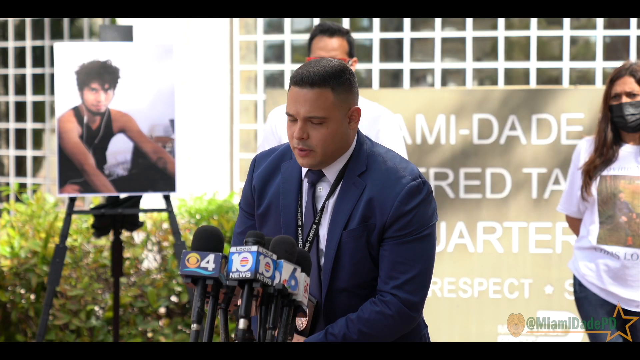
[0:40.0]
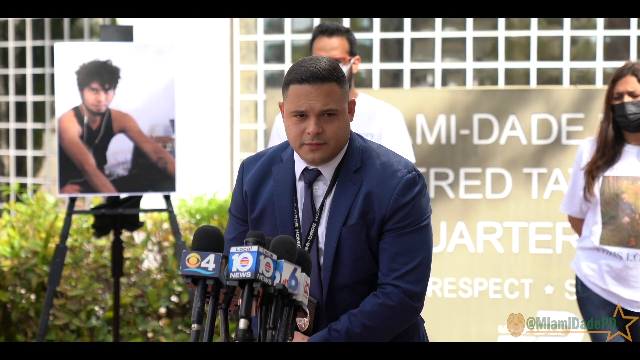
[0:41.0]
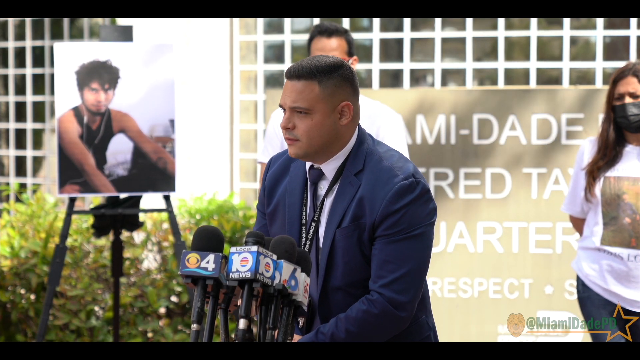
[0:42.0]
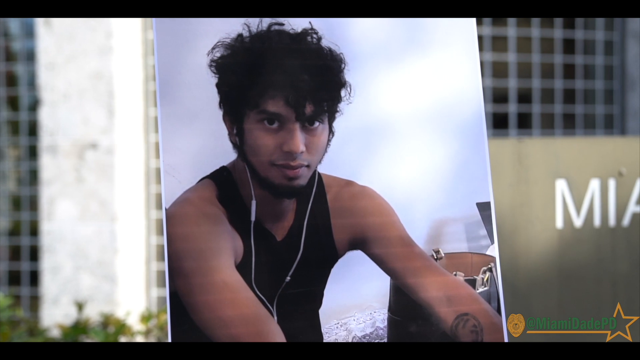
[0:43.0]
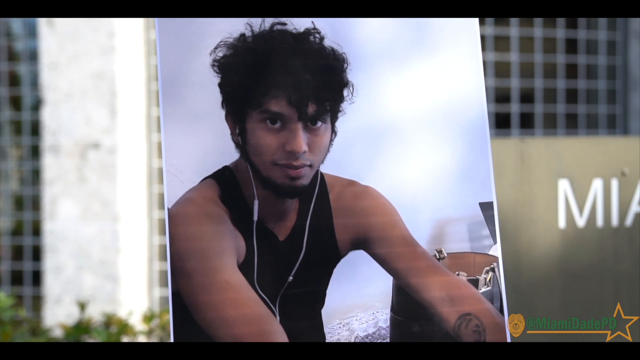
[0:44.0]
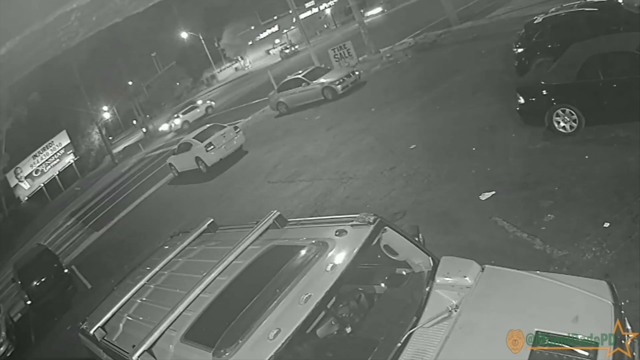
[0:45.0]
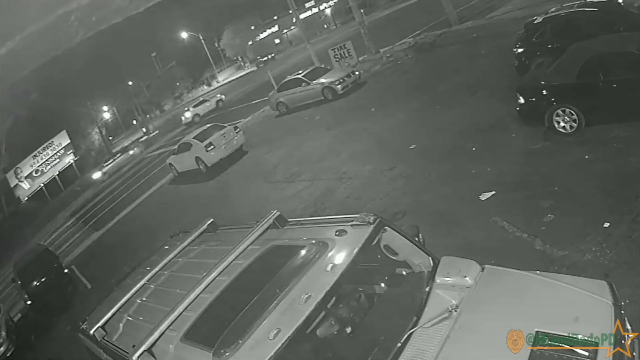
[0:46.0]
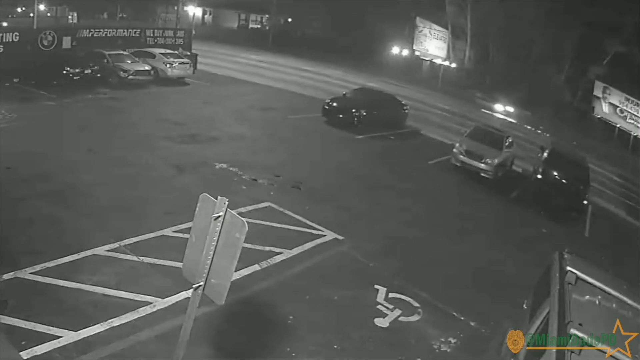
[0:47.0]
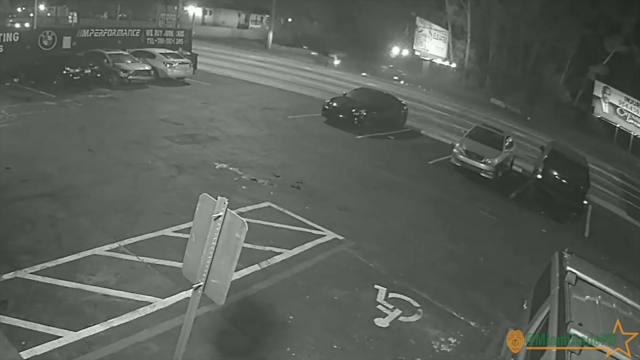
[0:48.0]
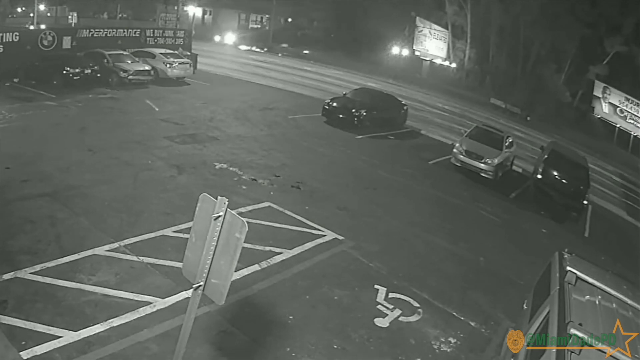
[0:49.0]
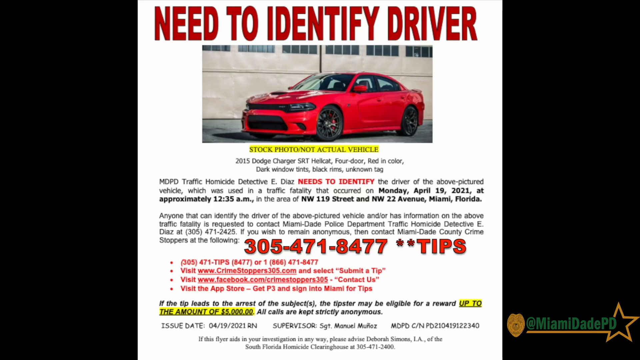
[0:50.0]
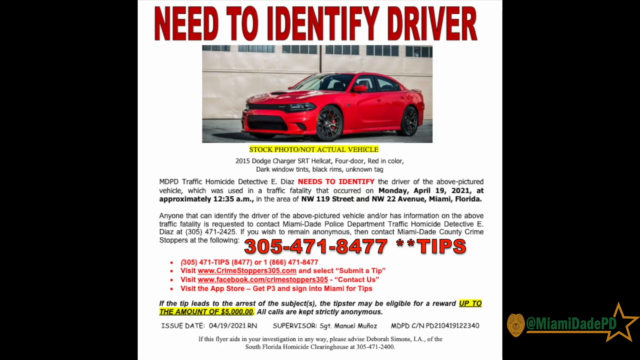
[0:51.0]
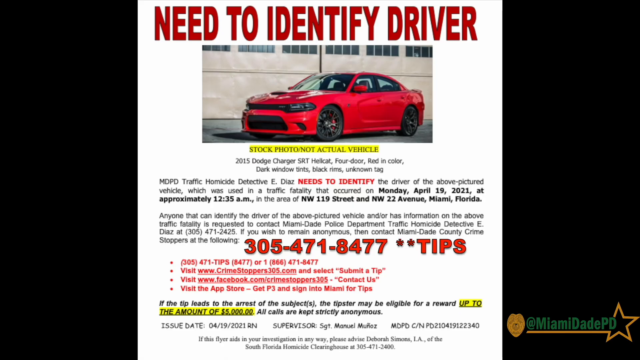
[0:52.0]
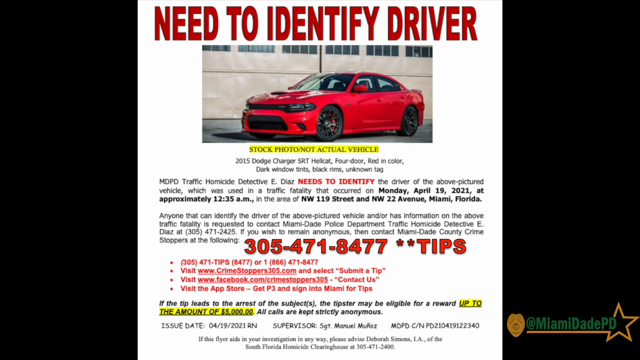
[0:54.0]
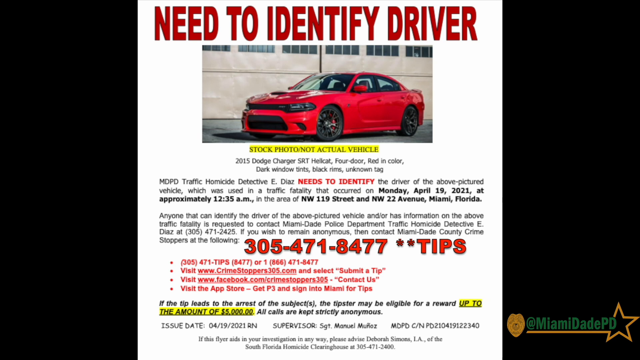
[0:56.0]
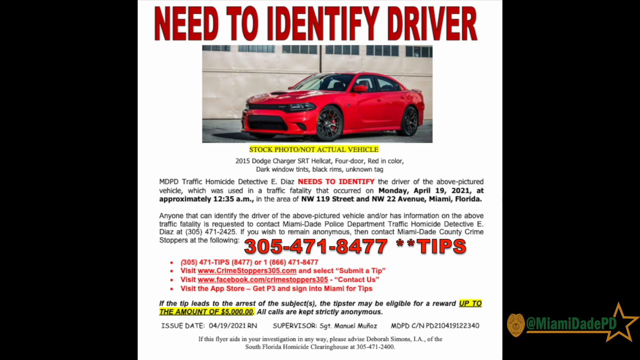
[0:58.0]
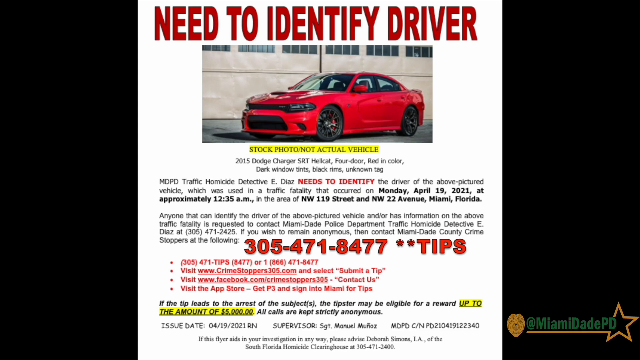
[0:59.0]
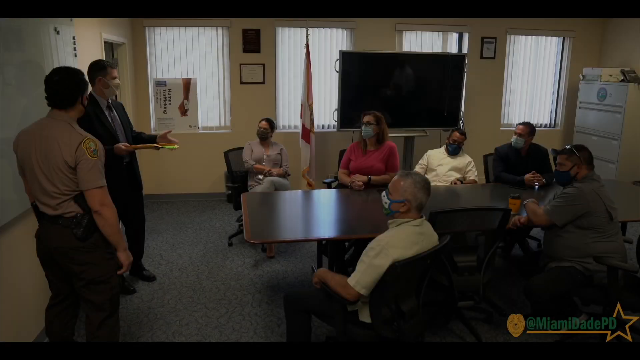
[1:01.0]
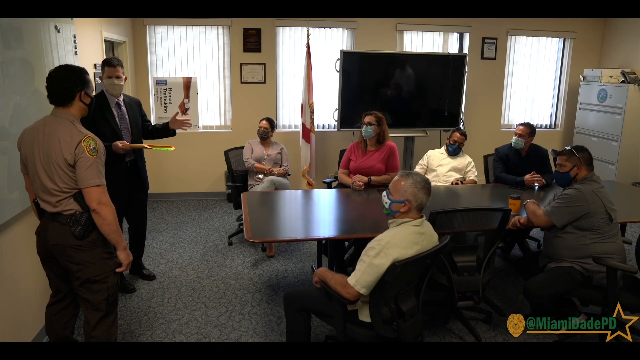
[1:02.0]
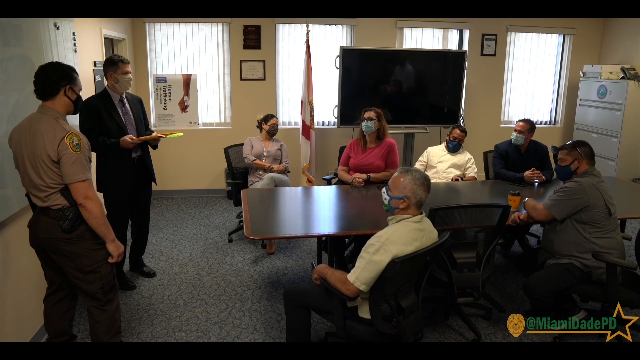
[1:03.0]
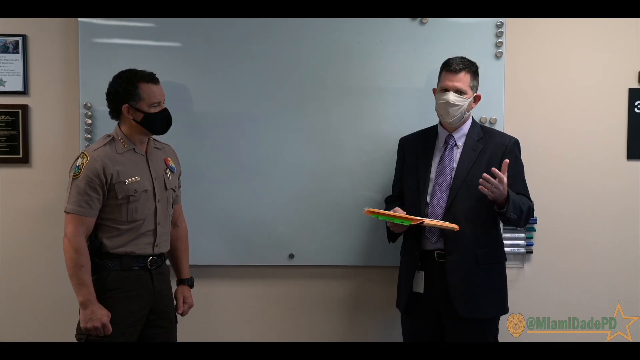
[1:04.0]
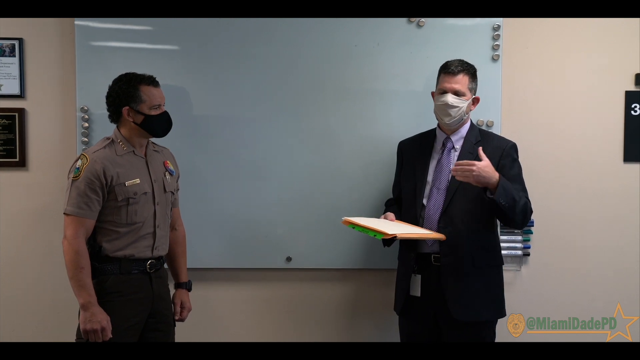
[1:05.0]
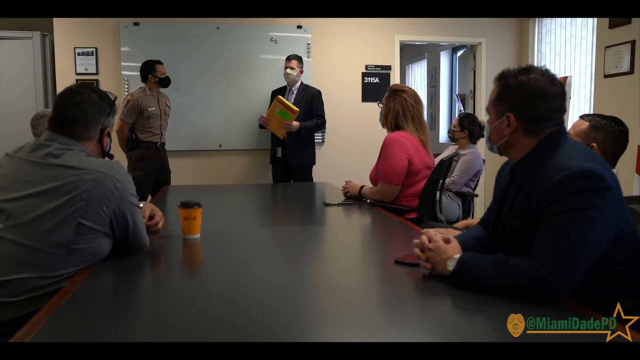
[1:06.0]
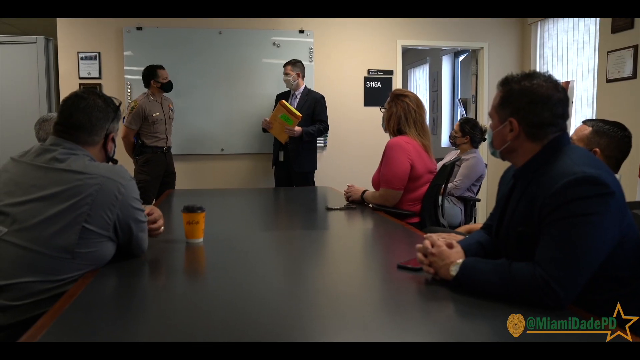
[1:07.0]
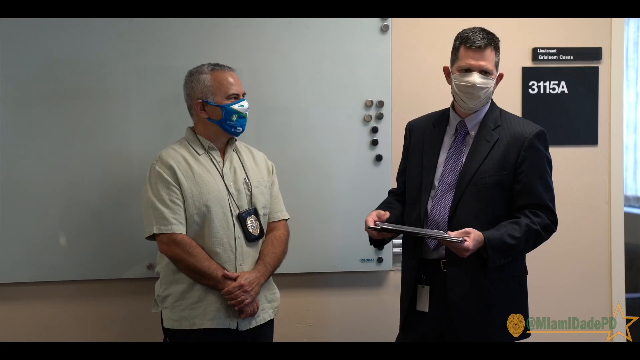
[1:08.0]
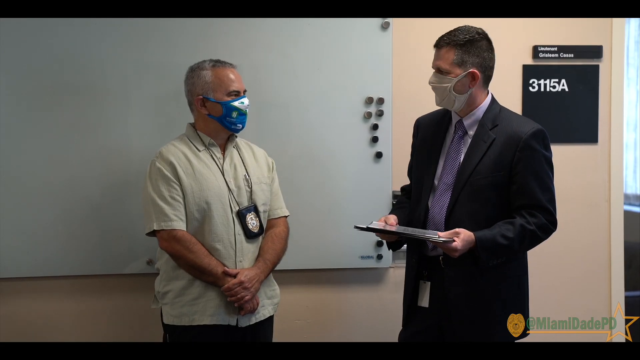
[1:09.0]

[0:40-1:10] The sequence shows a man, a motorbike moving, something moving on the water that turns out to be a helicopter, training, and people together in a meeting, followed by the restricted, protected area and the homicide notice for 3-year-old Elijah LaFrance.